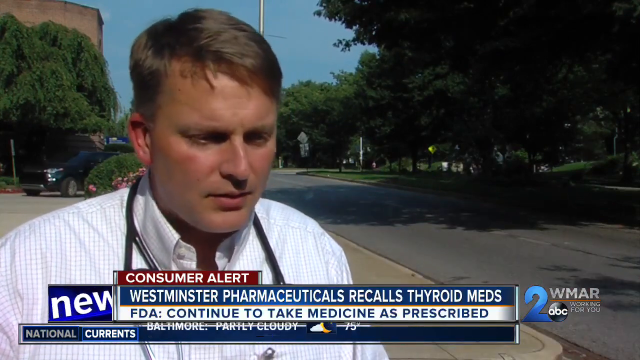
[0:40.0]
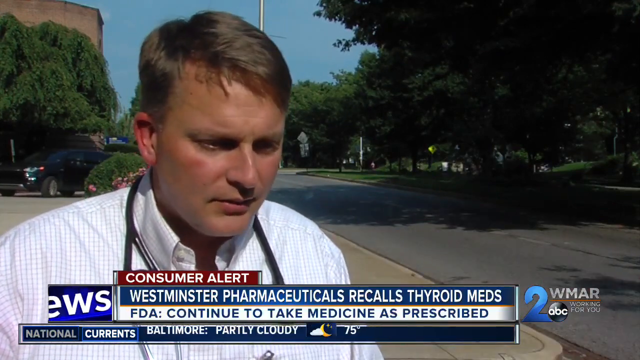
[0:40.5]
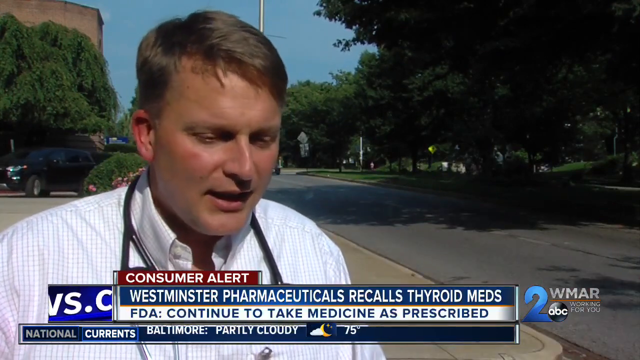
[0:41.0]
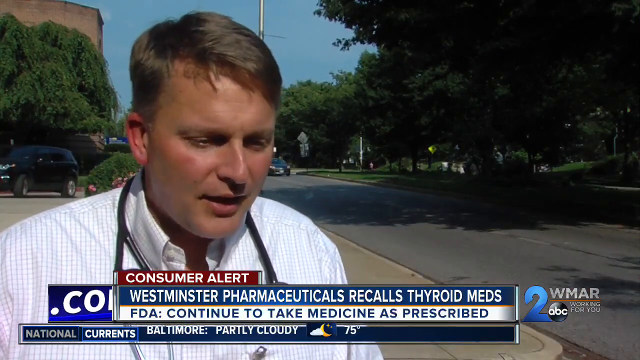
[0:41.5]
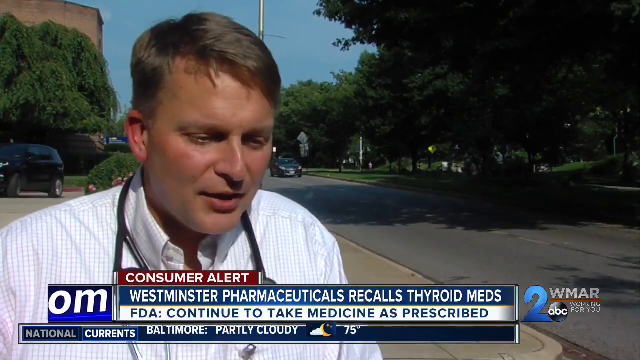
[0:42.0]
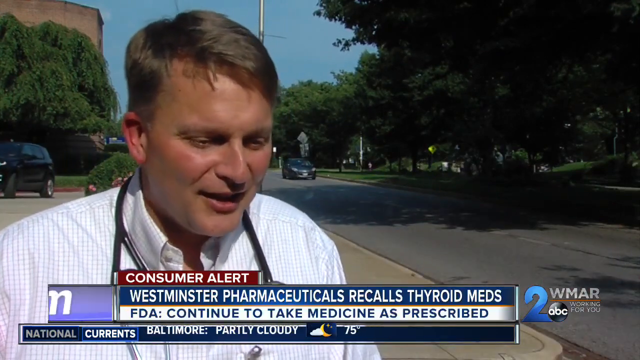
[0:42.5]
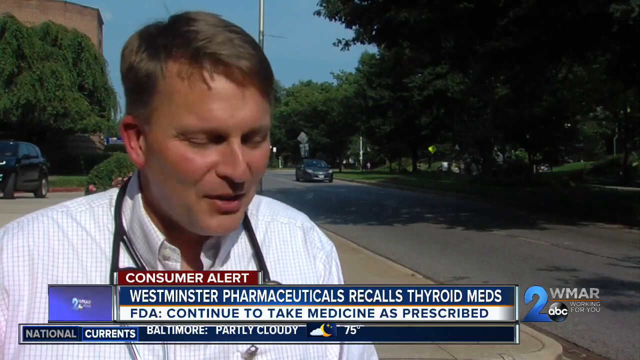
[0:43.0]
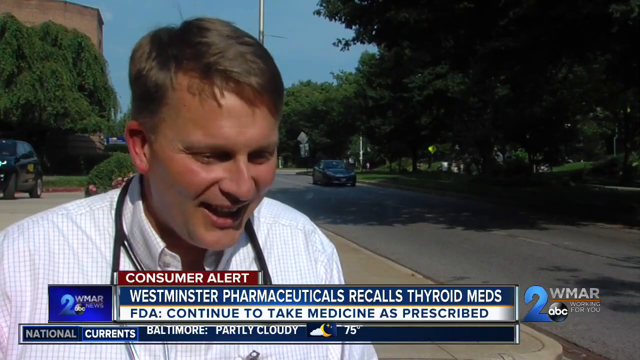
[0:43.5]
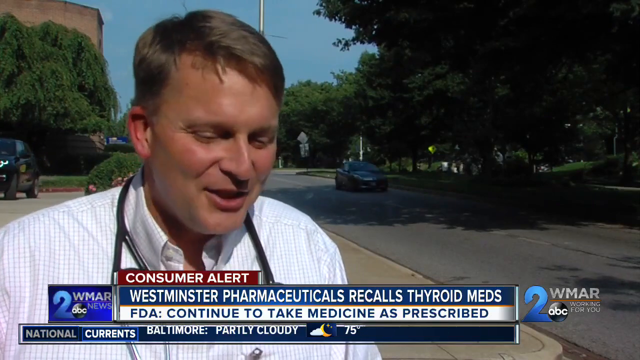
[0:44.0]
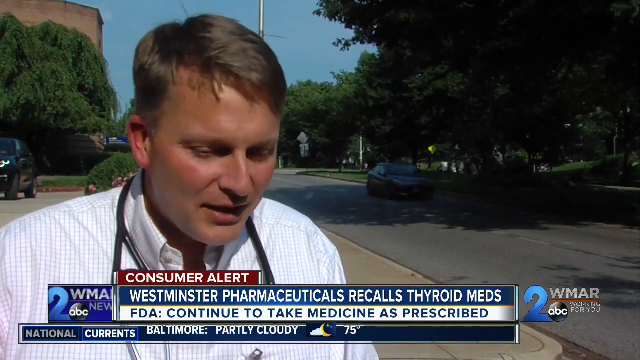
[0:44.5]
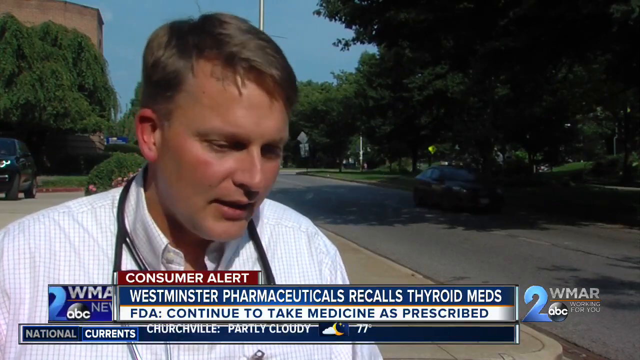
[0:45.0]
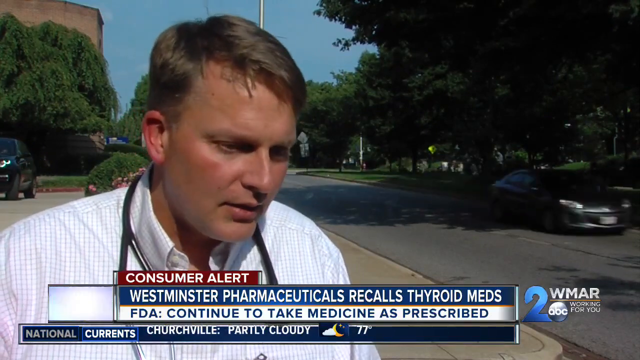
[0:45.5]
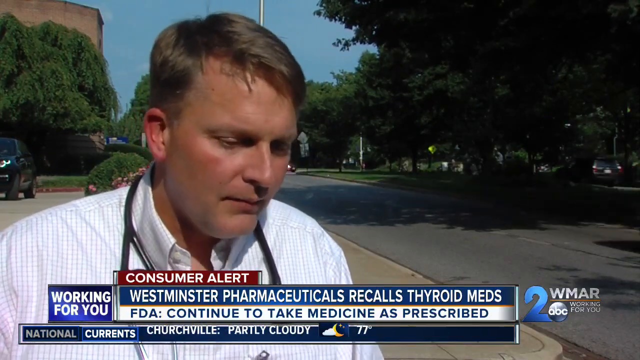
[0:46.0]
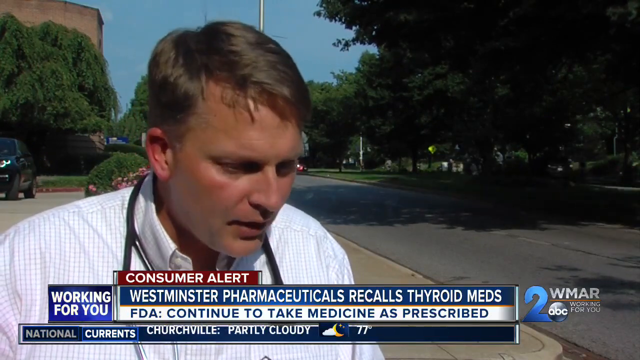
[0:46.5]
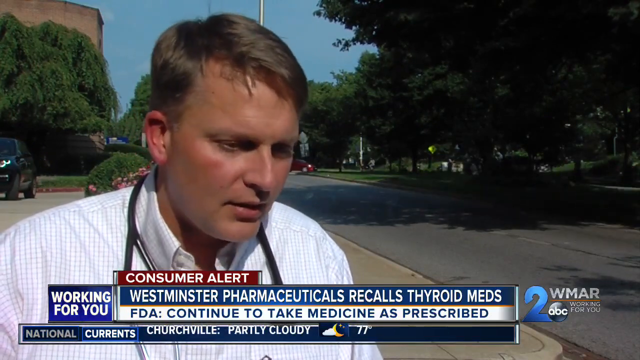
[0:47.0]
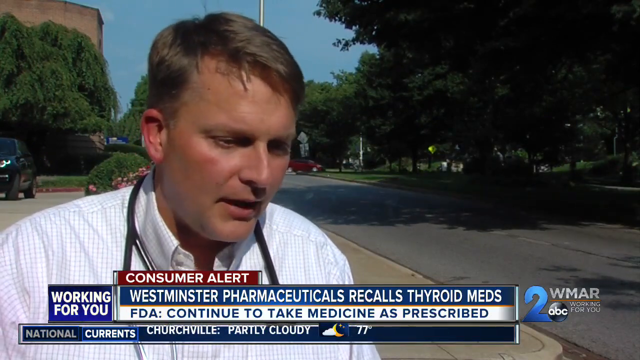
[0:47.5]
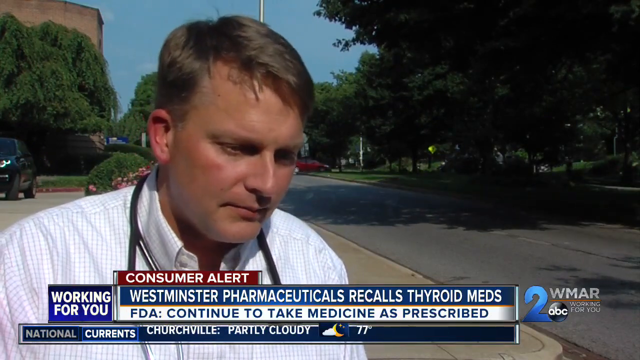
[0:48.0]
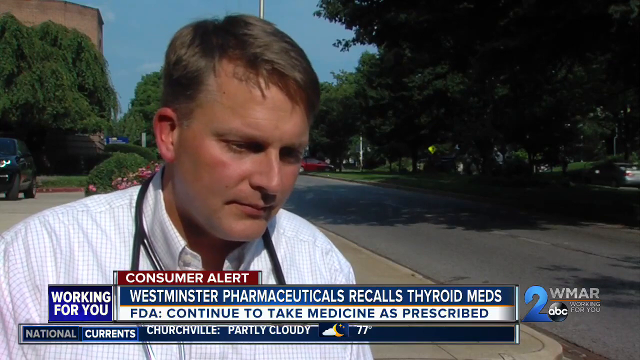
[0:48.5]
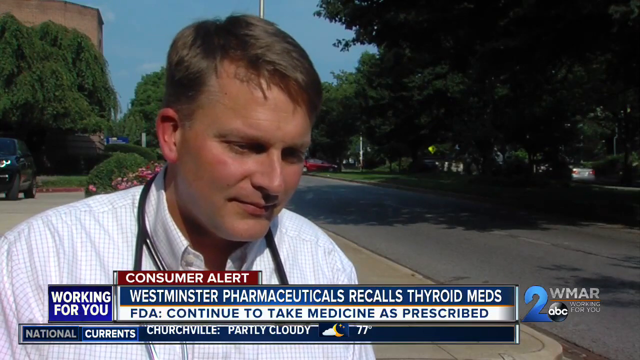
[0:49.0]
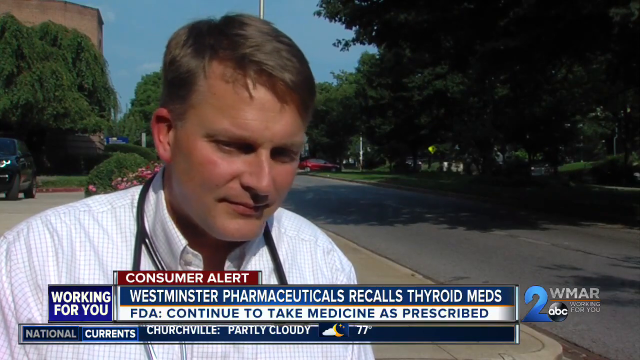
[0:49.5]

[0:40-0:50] This WMAR2 ABC News "working for you" consumer alert concerns a thyroid medicine recall from Westminster Pharmaceuticals, with the FDA recommending that people taking it continue to take the medicine as prescribed. A doctor is interviewed outside on a sunny day, wearing a white button-front collared shirt with a stethoscope around his neck. He smiles and nods yes. They are on a street lined with mature trees, and cars are moving. The doctor keeps nodding and seems convinced this will pass; his expression is not gloomy, and he is smiling.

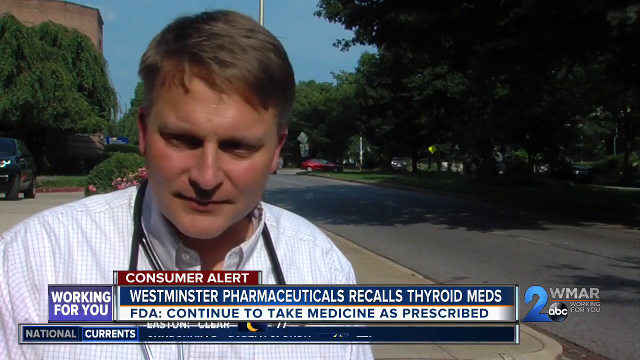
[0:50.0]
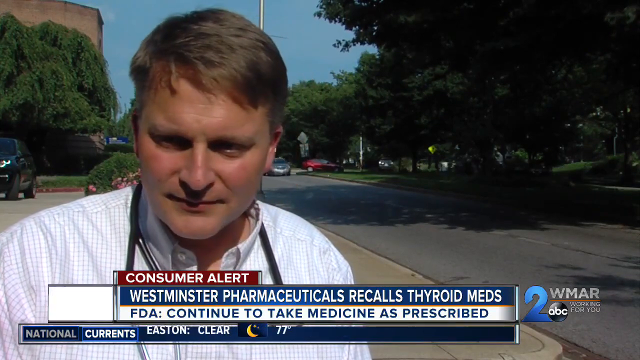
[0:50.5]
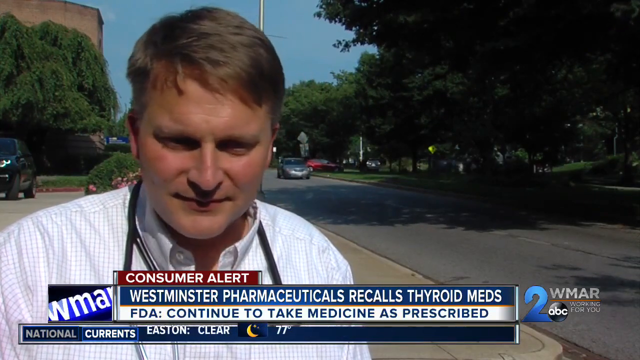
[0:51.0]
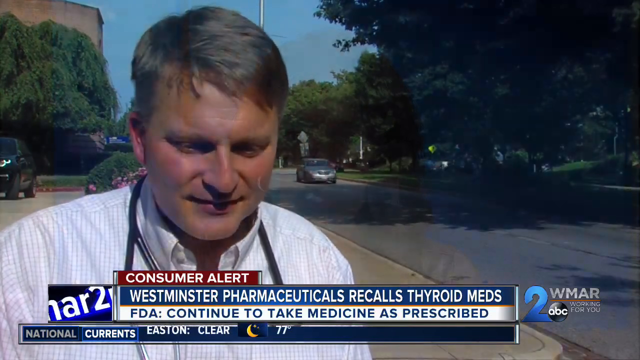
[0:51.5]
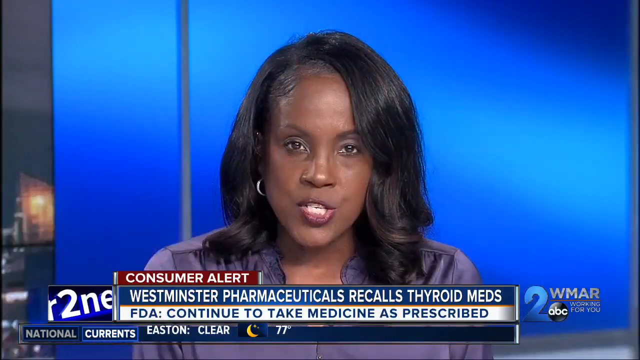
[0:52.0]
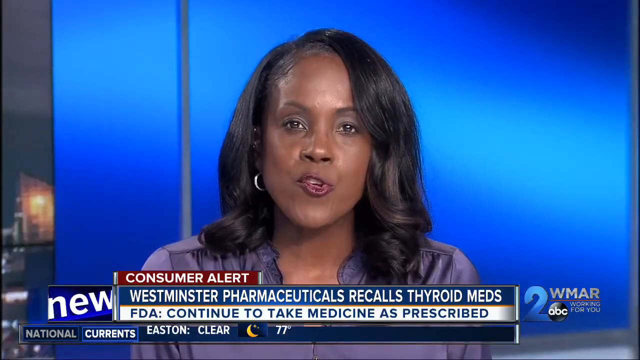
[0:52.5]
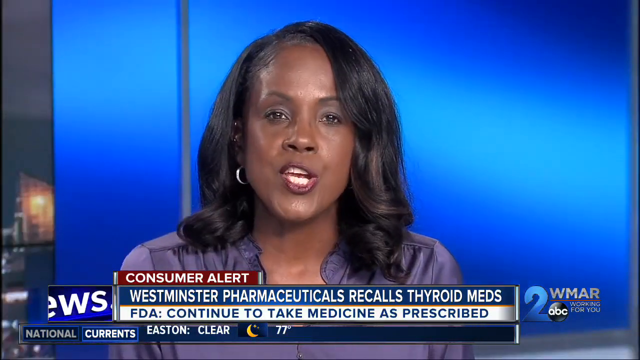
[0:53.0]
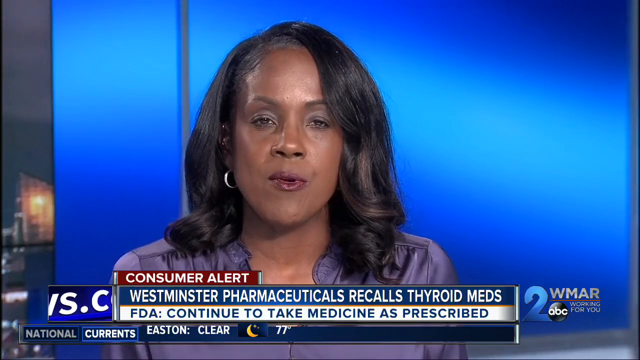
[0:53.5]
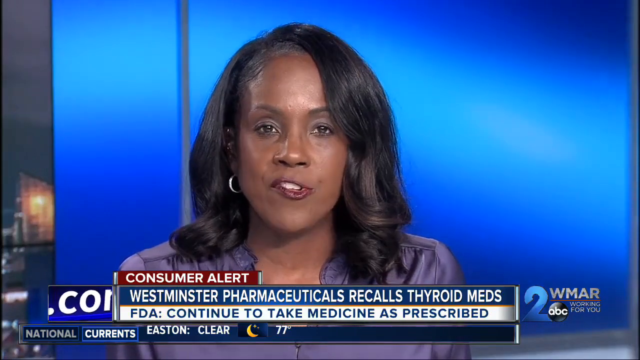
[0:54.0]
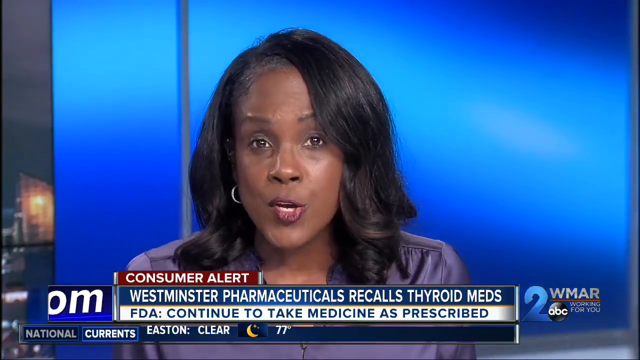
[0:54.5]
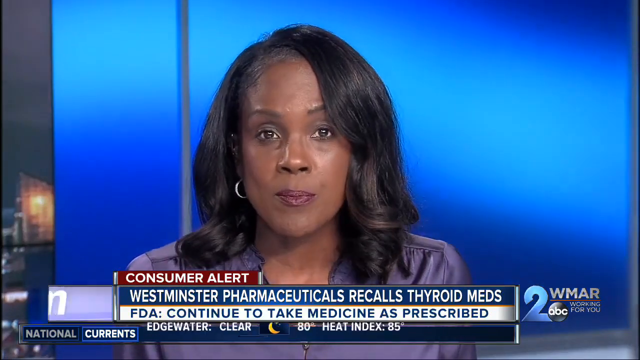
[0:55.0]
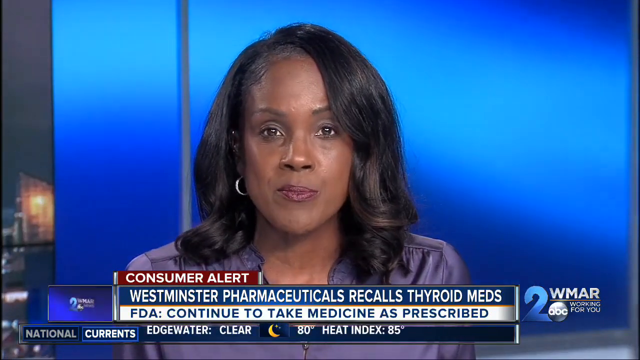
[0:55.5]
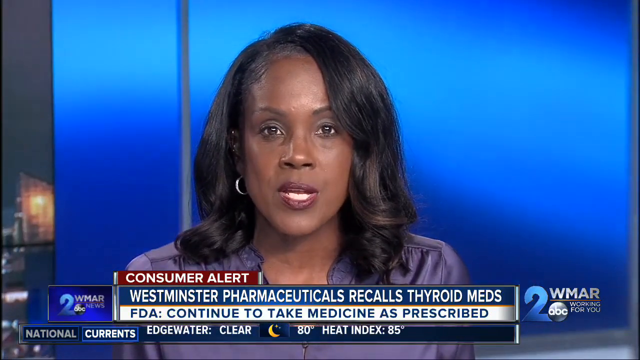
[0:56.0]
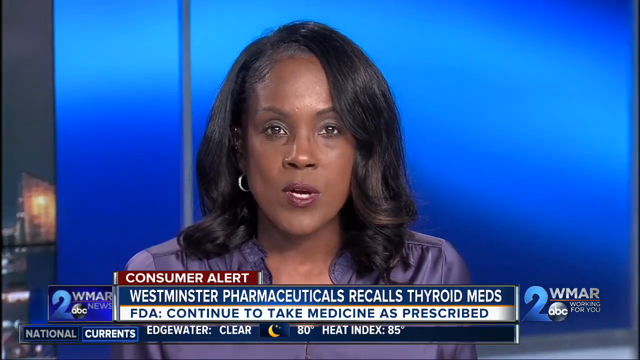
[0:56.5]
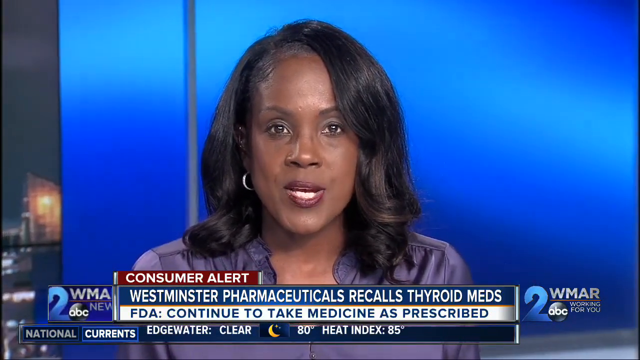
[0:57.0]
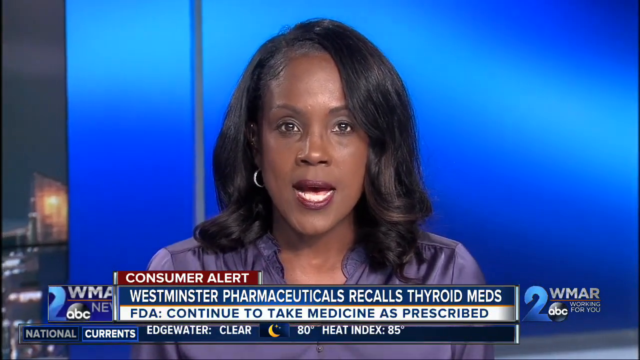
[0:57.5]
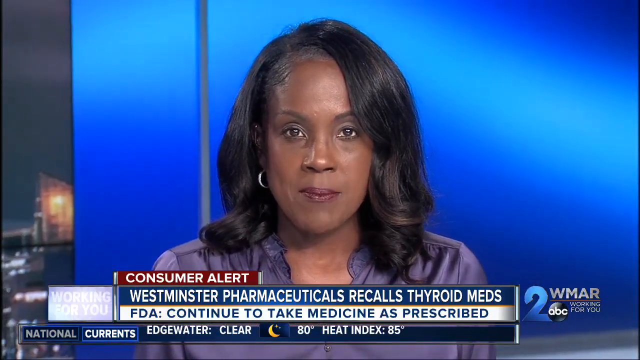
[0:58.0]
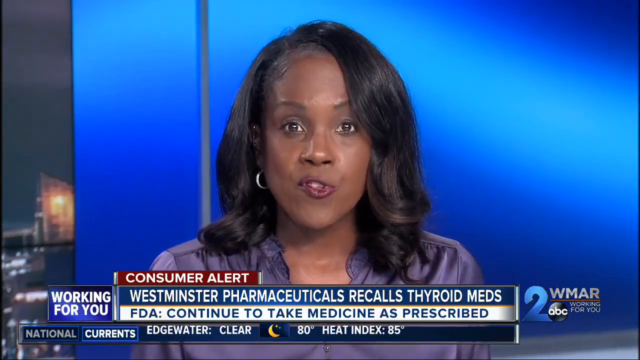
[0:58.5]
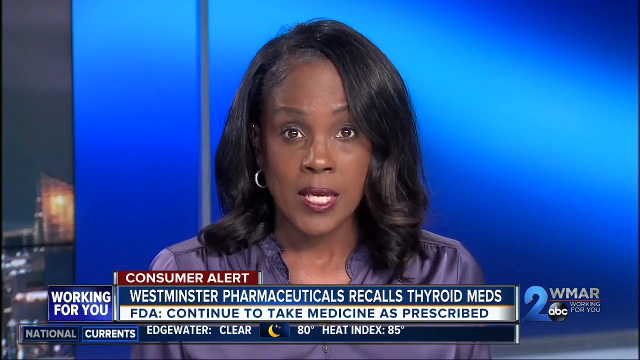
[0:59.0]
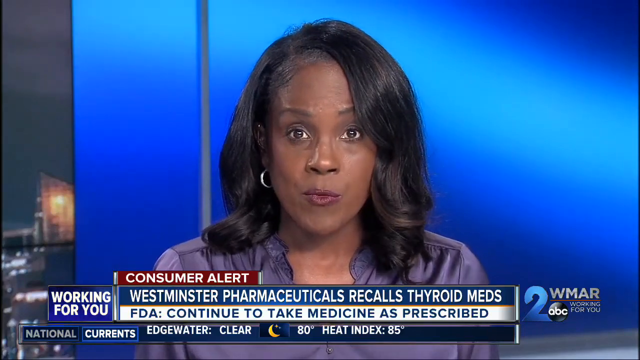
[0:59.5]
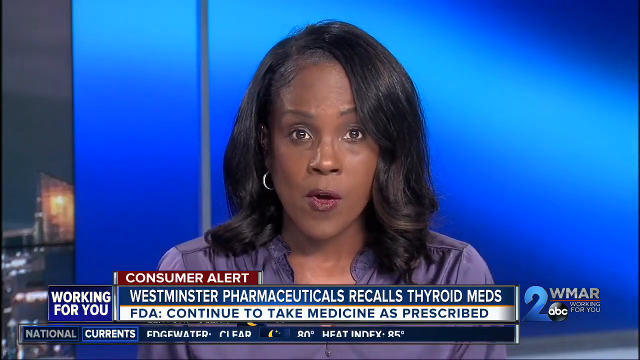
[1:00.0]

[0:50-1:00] A WMAR2 ABC News "working for you" consumer alert reports that Westminster Pharmaceuticals recalls thyroid meds and that the FDA advises continuing to take the medicine as prescribed. The shot is in a newsroom with an African American woman newscaster in front of an electric blue background with a small city skyline. She has shoulder-length hair and wears a satin lavender top and earrings. She nods matter-of-factly, as if to say this is a serious issue, but she does not look gloomy.